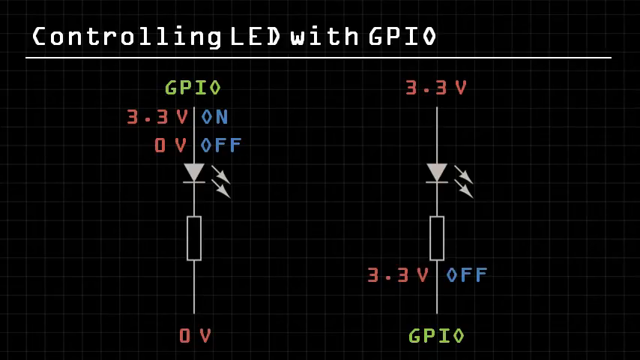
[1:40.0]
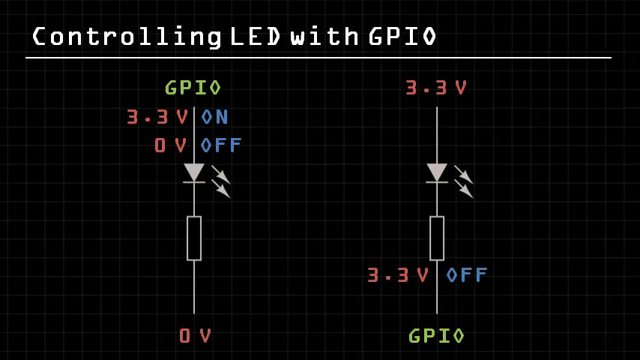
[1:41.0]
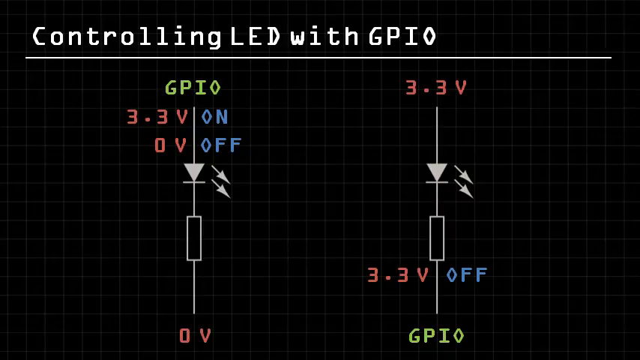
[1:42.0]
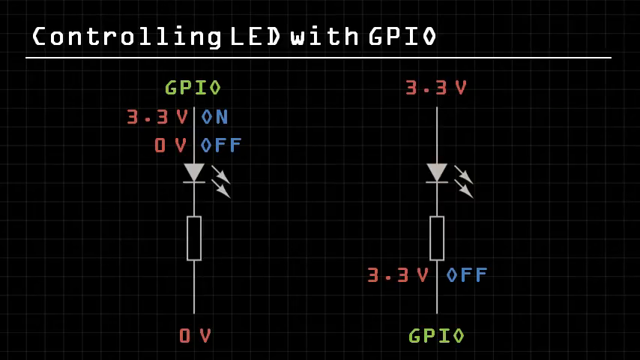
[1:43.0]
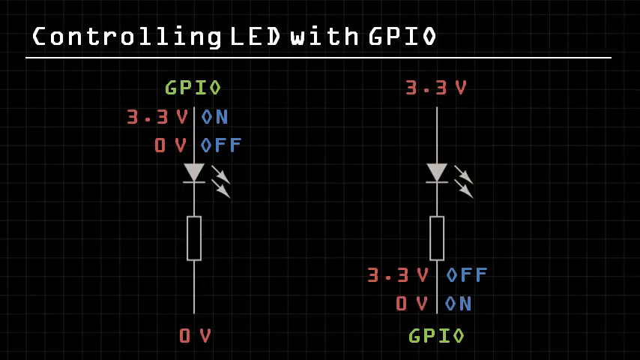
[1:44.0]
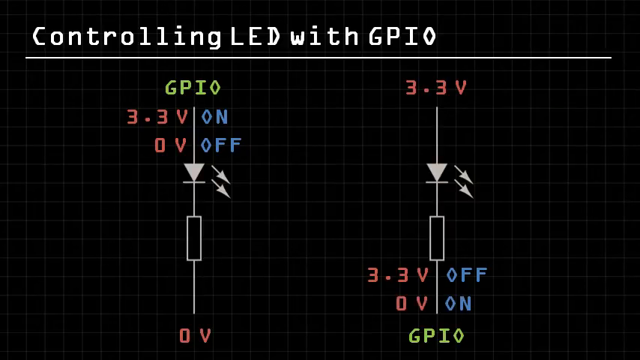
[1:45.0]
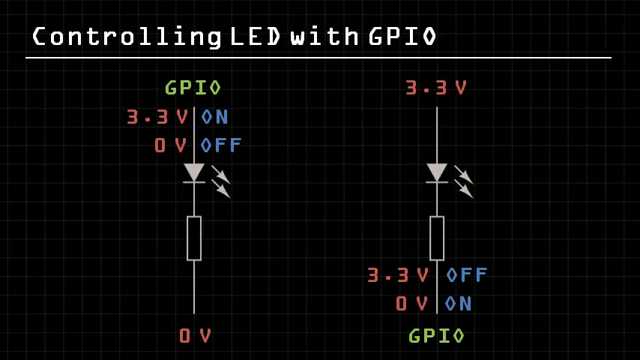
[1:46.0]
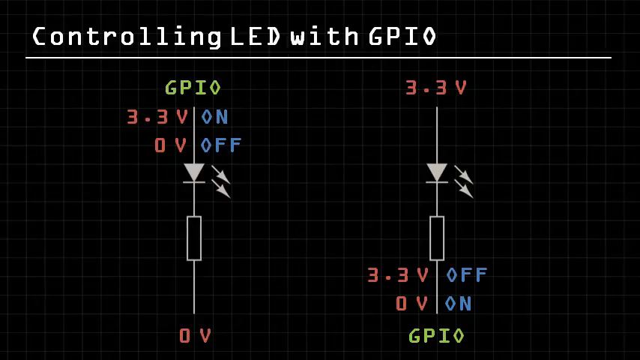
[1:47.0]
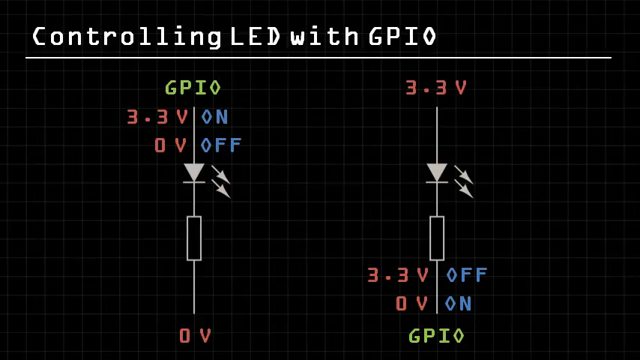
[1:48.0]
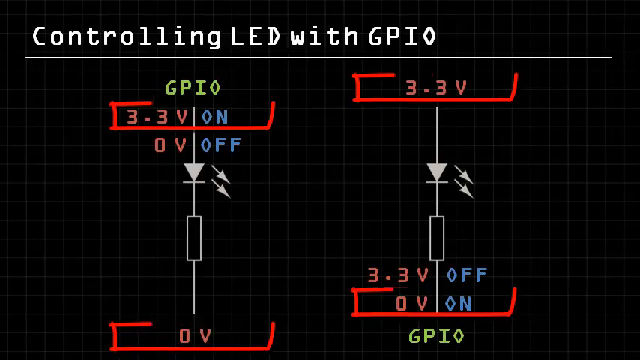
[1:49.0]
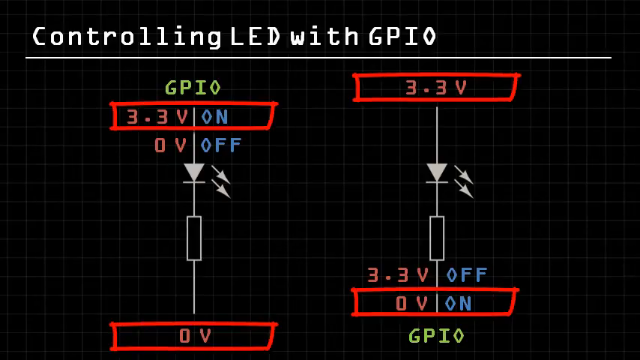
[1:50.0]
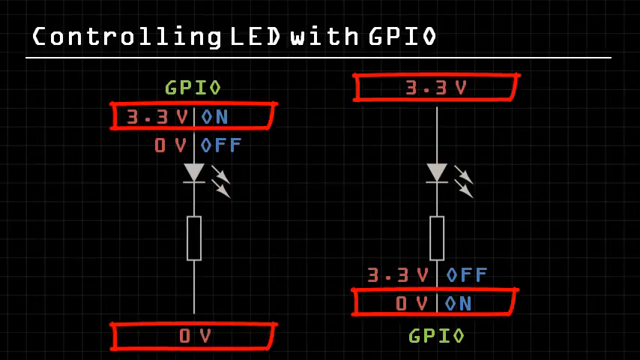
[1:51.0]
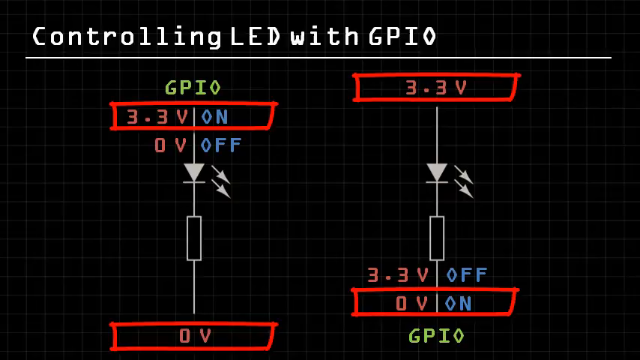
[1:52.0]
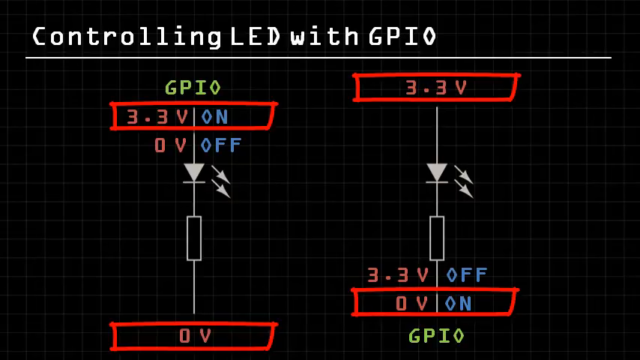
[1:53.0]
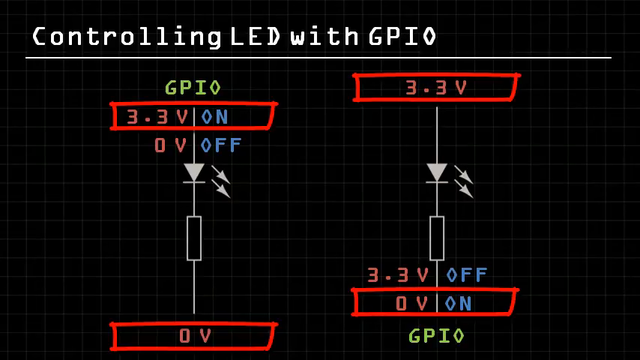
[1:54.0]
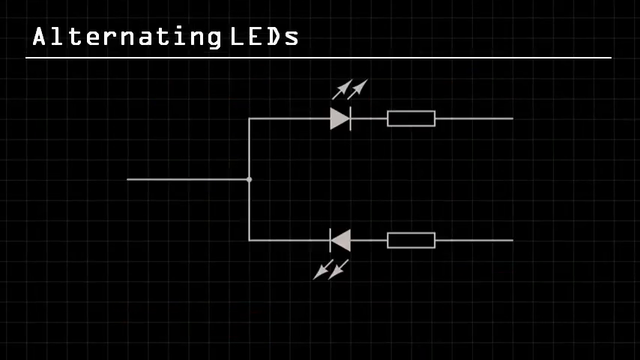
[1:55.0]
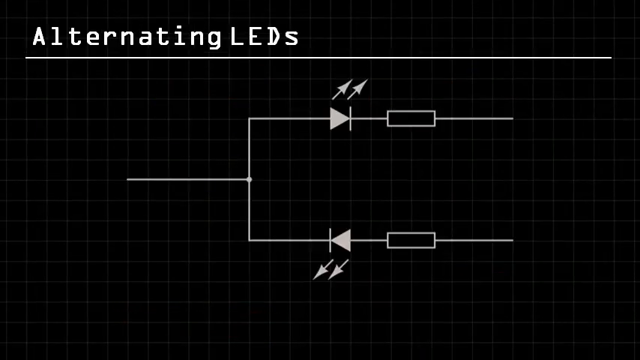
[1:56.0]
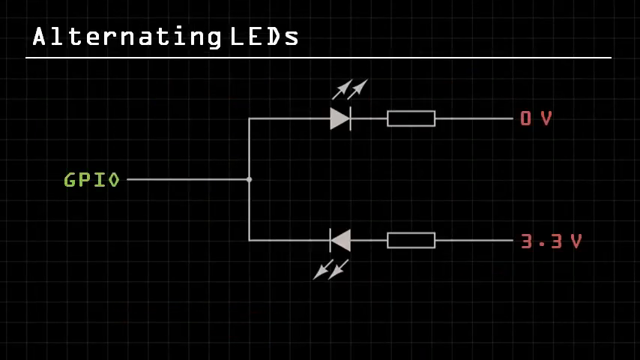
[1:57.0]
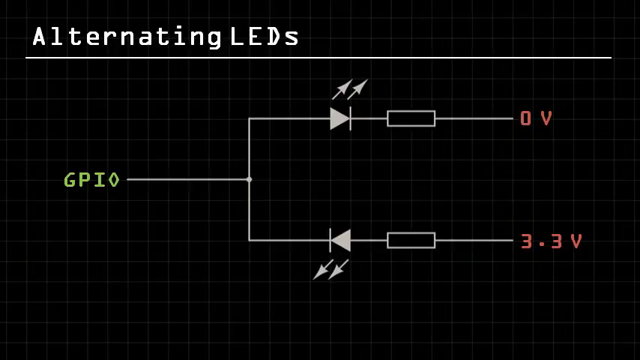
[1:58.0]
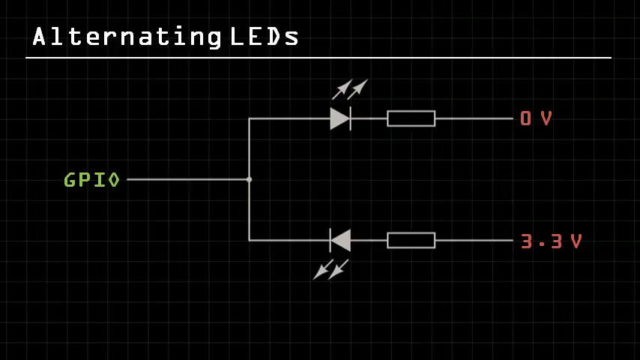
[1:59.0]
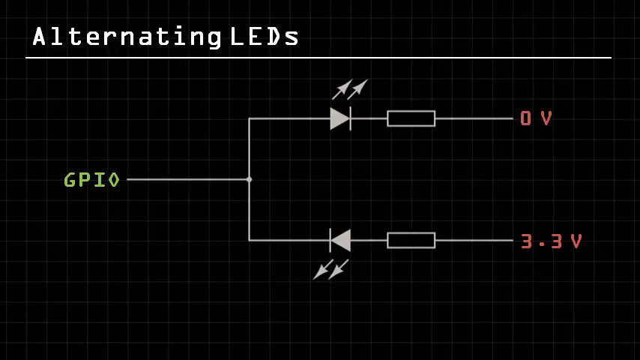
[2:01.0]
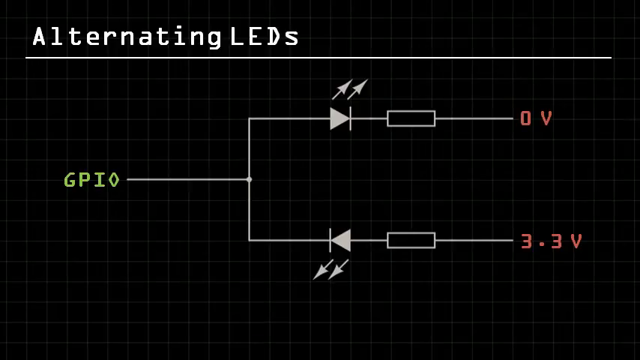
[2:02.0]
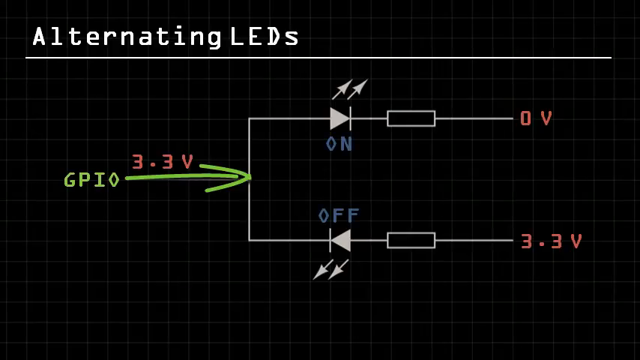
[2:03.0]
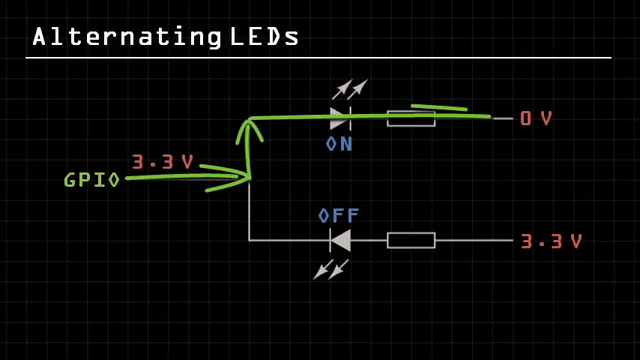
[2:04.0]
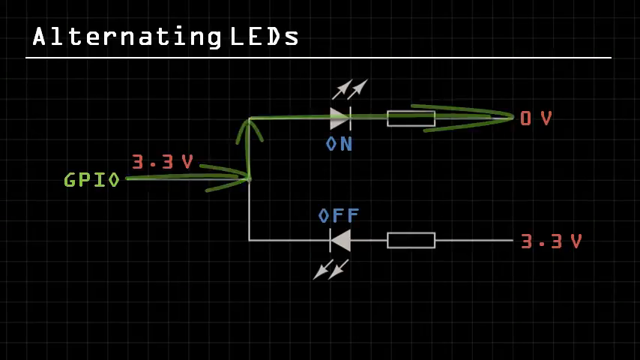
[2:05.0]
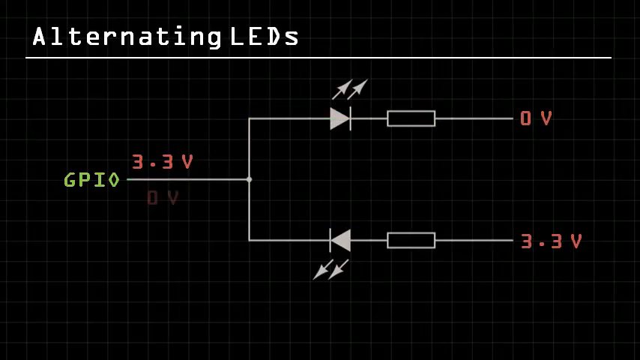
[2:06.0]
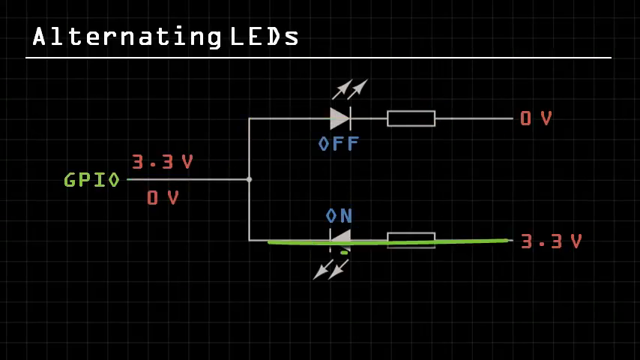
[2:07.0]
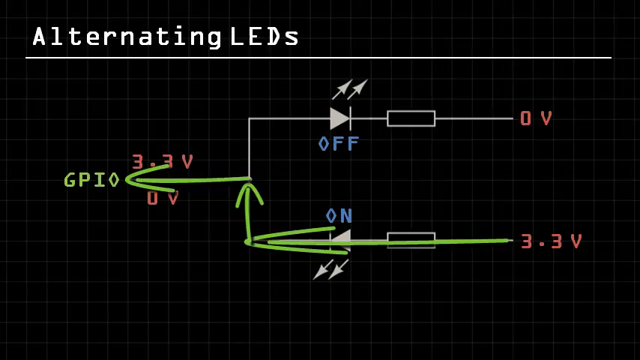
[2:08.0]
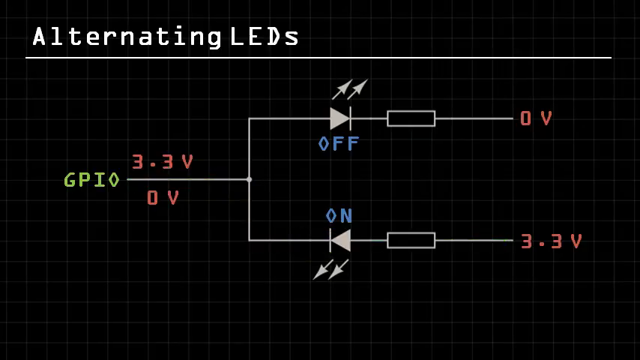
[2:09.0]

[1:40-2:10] Beneath the red 3.3V and blue OFF on the right-hand diagram, more text appears: "0V" in red on the left and blue "ON" on the right. Some of the calculations are then circled with a red square on both diagrams. On the left diagram, the top figure, 3.3 volts with ON, is circled, and below it the bottom figure, zero volts. On the right diagram, the 3.3 volts at the top is circled in a red square, as is the zero volts with the blue ON at the bottom. The video moves to another diagram, this one called alternating LEDs, in which the lines are horizontal instead of vertical. From GPIO, a horizontal line splits into two vertical lines that then run horizontally, like a tree. The top horizontal line has a triangle with two points on the left and one point on the right, with two arrows coming off it pointing diagonally up; a horizontal line is attached to the point it faces, and the line continues horizontally into a rectangle and then into "0V" in red. The bottom line goes into the same triangle facing the opposite way, with arrows pointing diagonally down, and its value is 3.3 volts. Additional lines are drawn showing the path of flow from the top to the bottom, with the top side going to the right and the bottom side coming from the left into the GPIO.